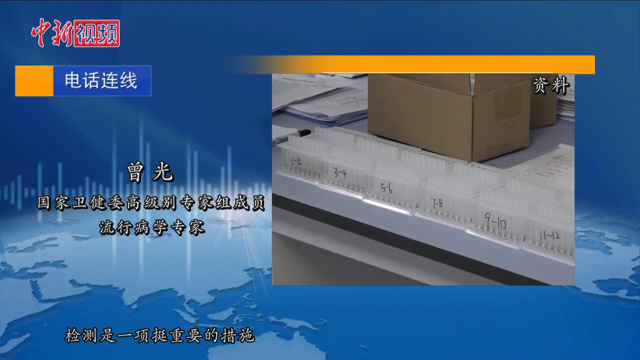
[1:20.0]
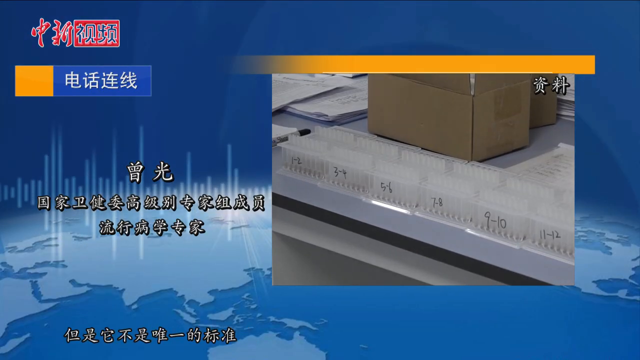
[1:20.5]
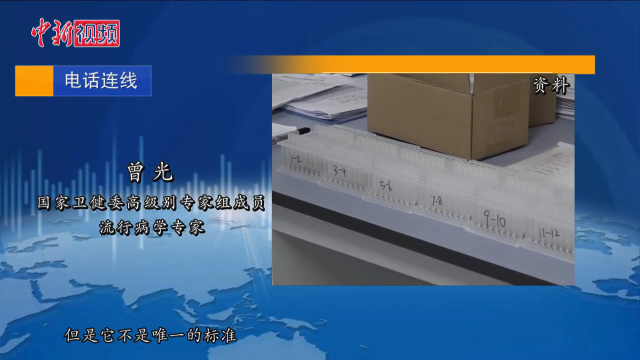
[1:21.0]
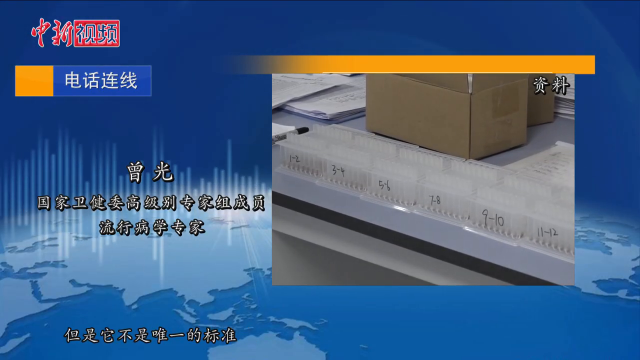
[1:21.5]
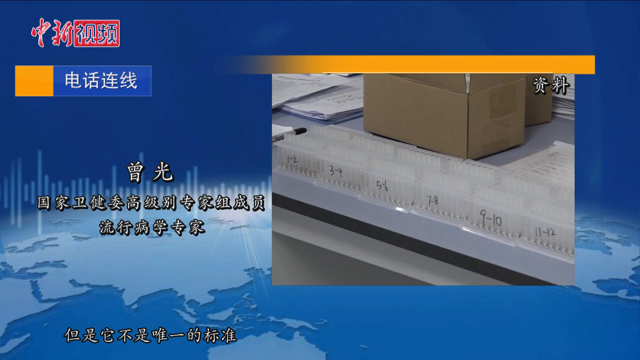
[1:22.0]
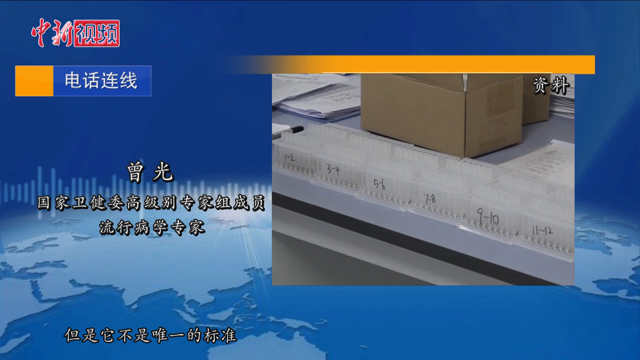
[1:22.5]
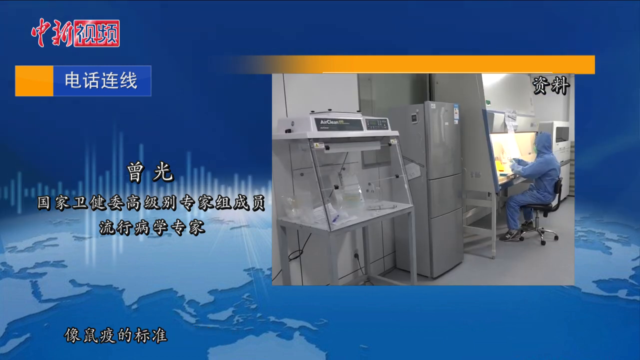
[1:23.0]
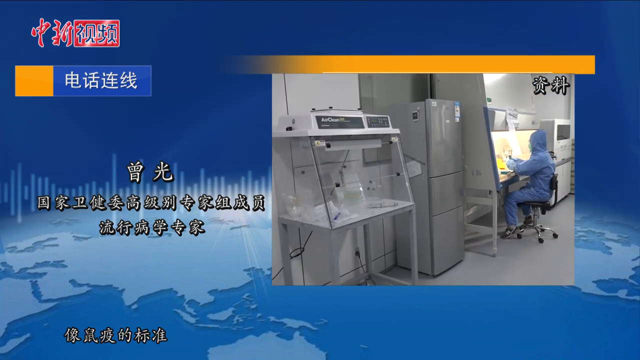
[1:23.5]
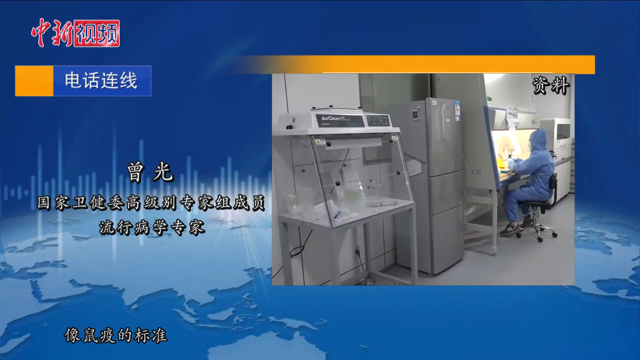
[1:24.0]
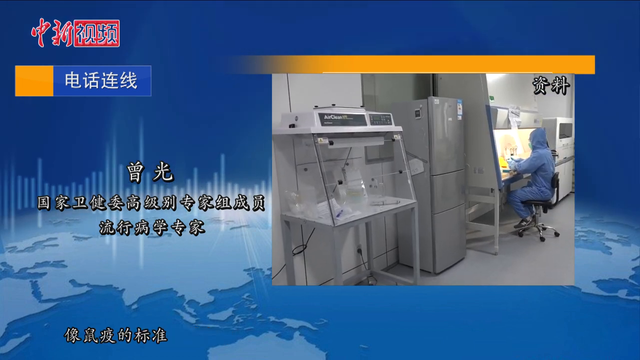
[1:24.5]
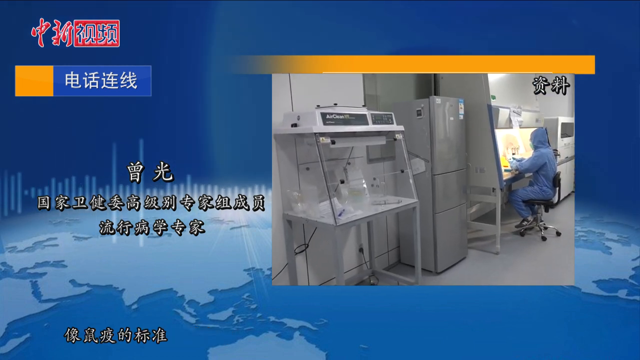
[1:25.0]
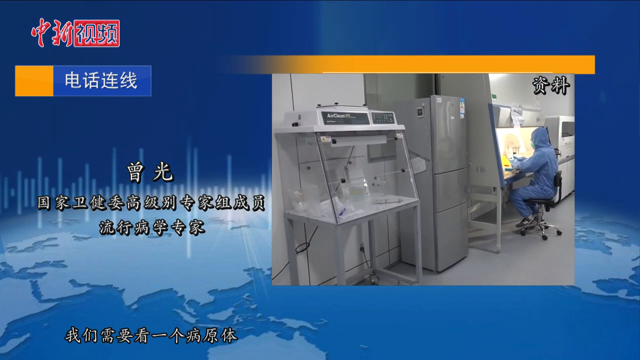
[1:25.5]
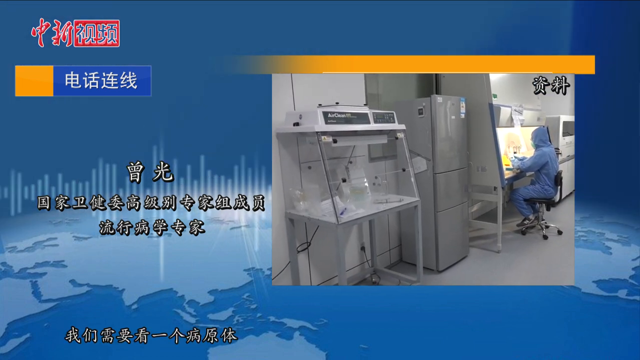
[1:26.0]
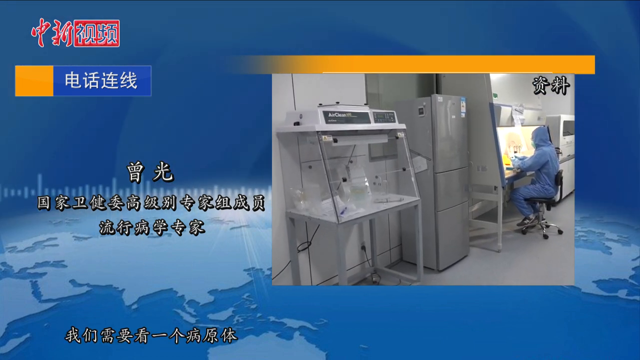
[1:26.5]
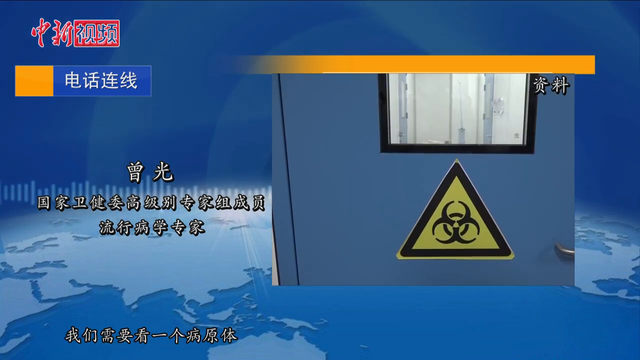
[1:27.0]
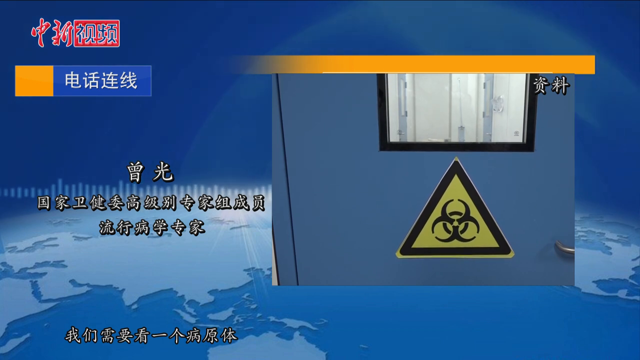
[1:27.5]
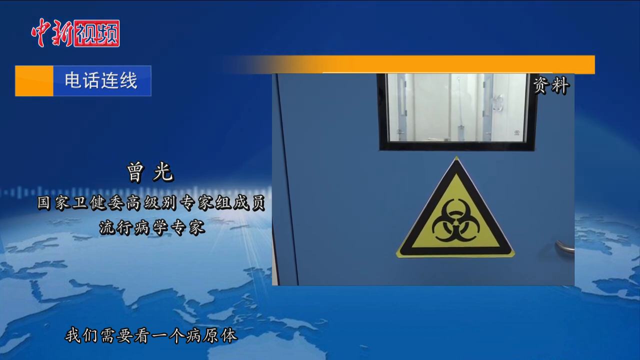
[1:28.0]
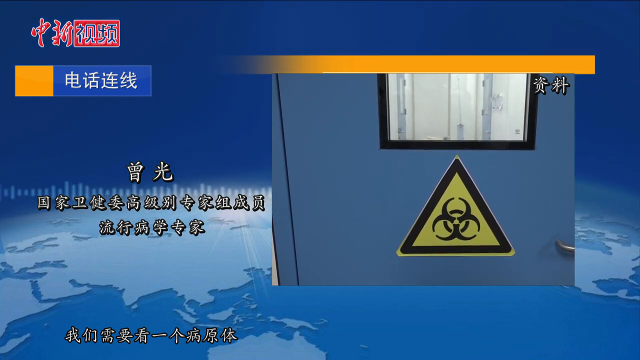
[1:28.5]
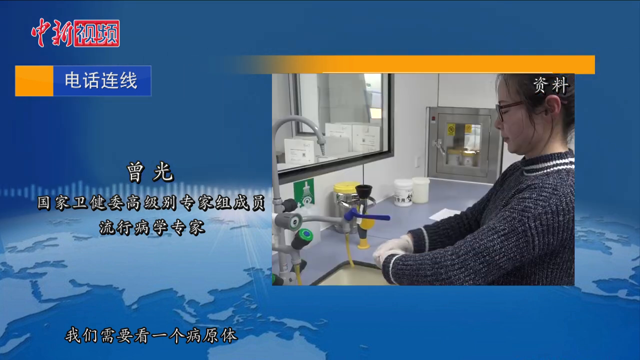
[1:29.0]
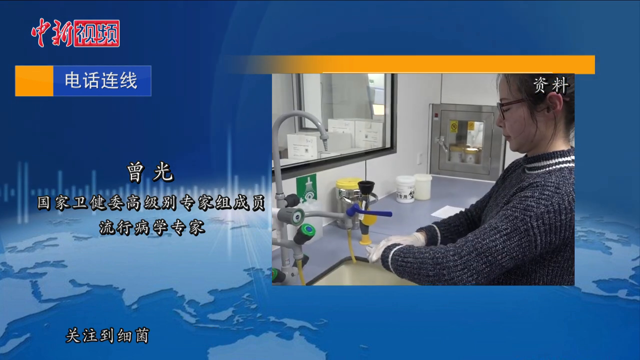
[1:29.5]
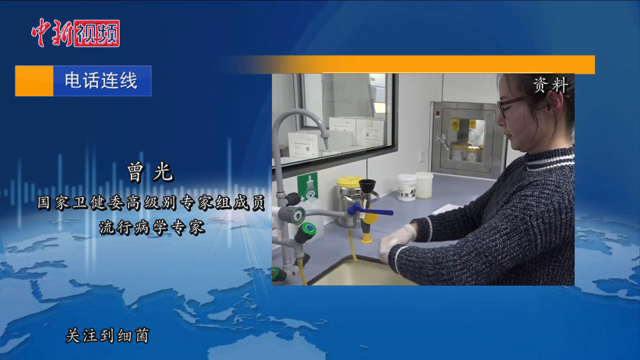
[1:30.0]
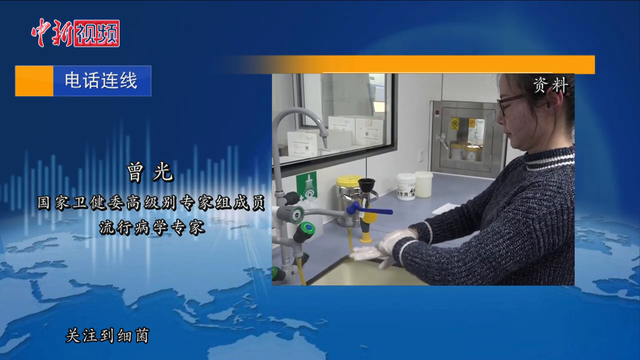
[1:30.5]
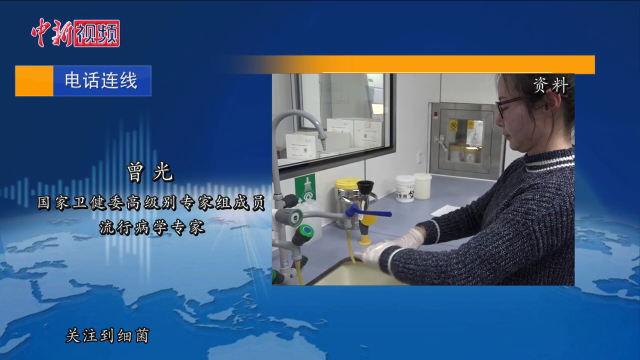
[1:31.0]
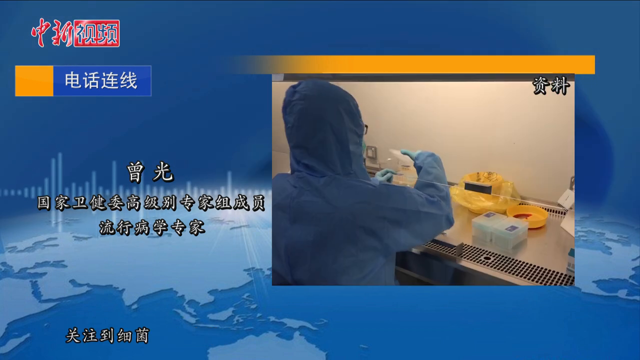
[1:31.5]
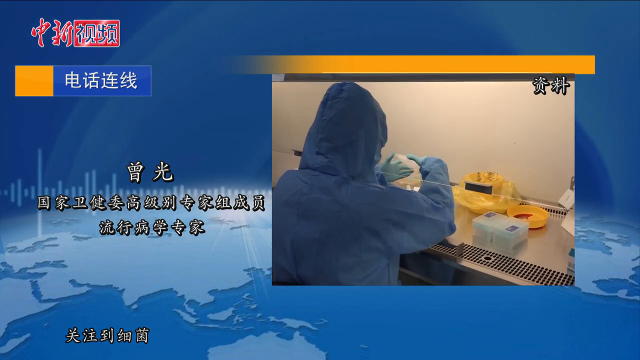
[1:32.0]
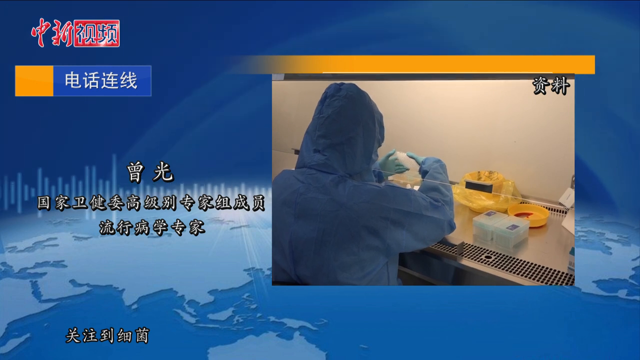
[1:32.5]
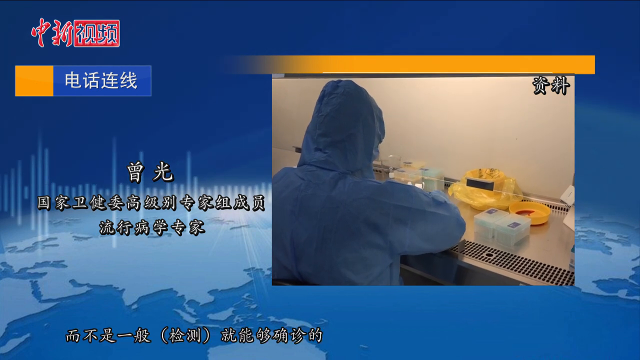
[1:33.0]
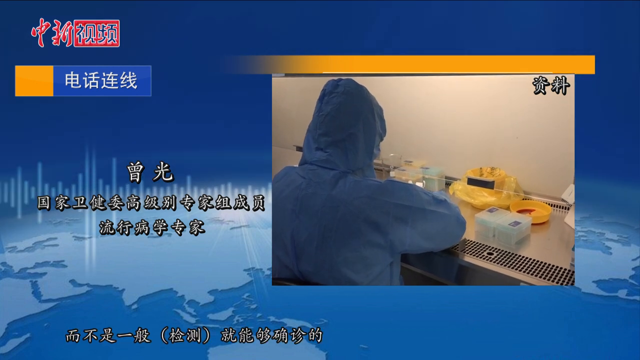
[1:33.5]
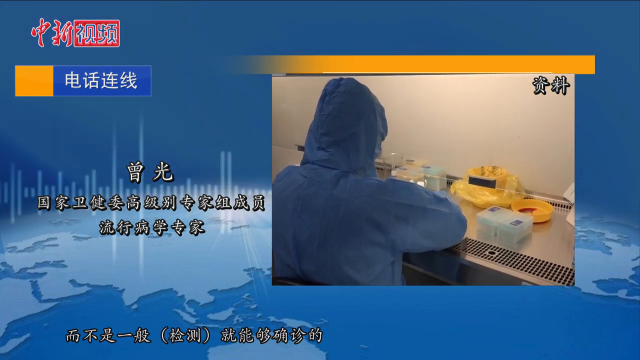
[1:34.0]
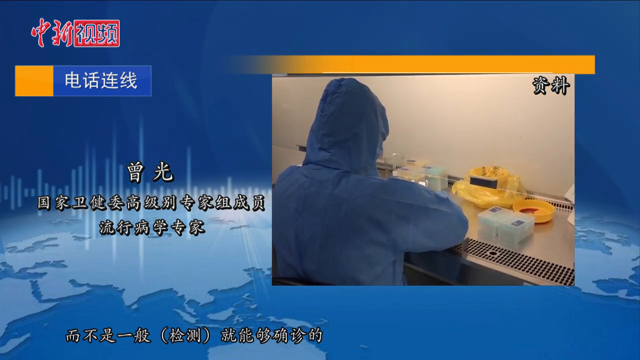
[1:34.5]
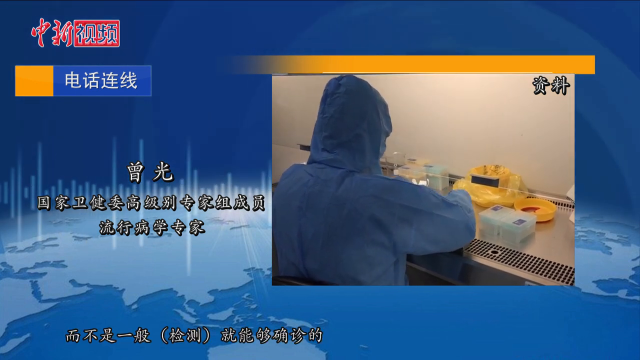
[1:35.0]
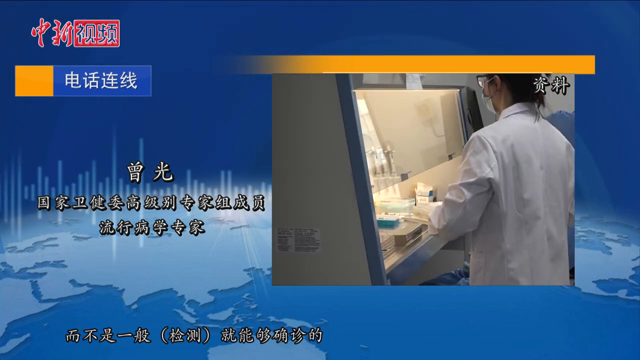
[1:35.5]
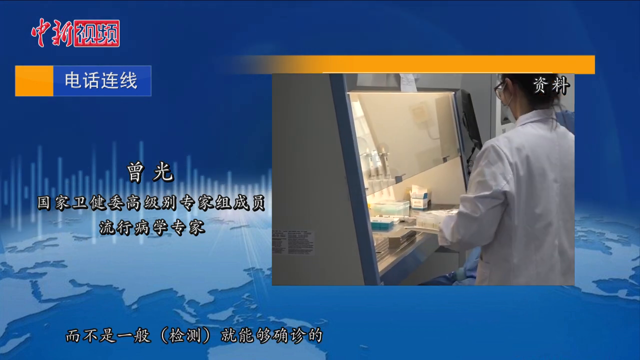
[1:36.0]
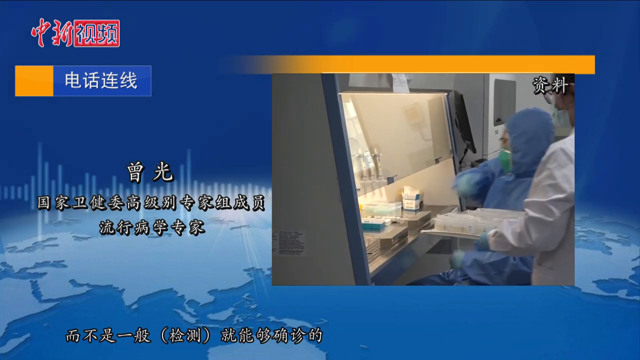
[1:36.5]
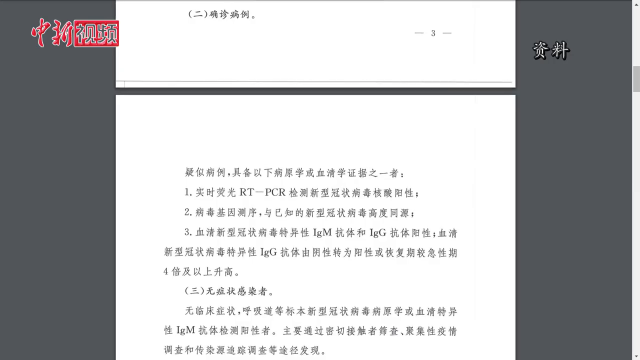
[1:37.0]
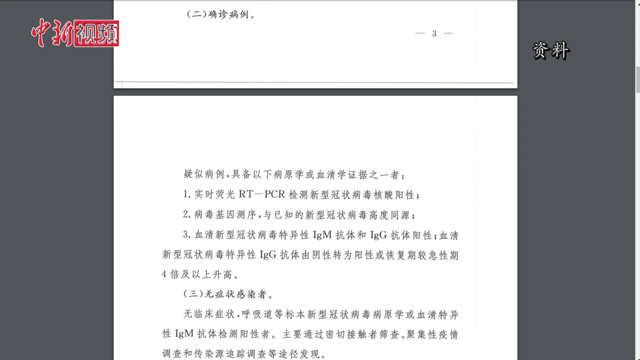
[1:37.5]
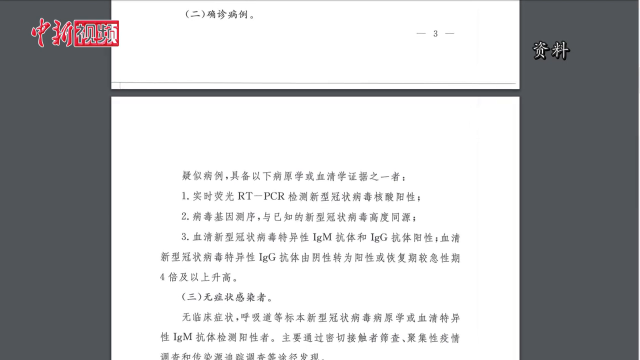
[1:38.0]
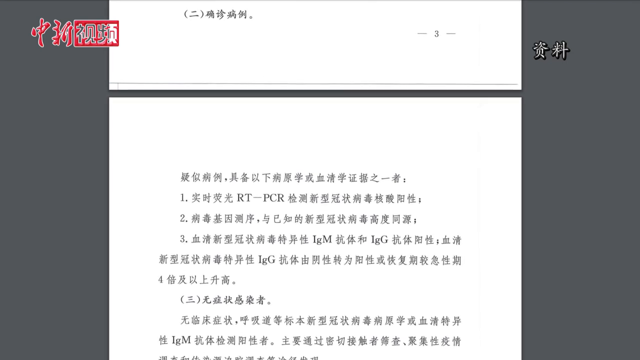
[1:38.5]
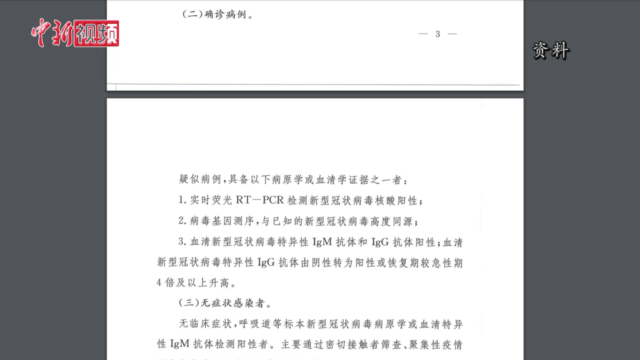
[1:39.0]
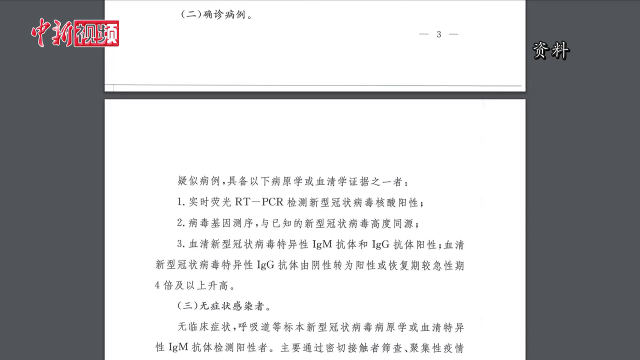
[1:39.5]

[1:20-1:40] The lab work continues, with scientists in hazmat suits and sometimes people wearing masks and gloves or scrubs. At one point a woman washes her gloves. The footage keeps switching between full screen and a smaller window on the graphic backdrop. Afterward the video returns to the Word document, apparently the top of a different, unnumbered page.